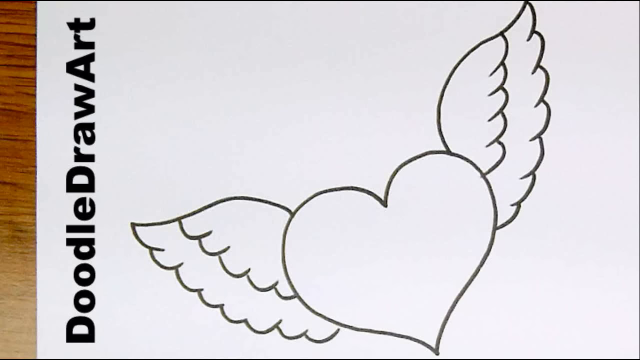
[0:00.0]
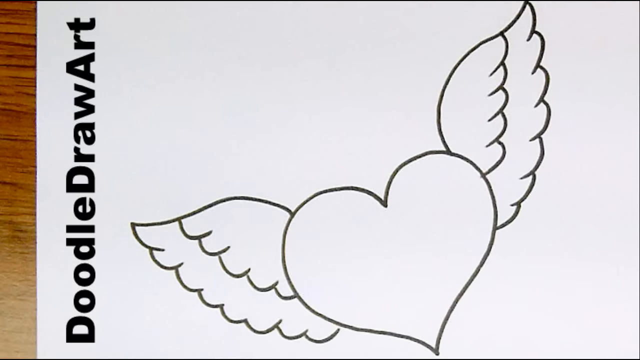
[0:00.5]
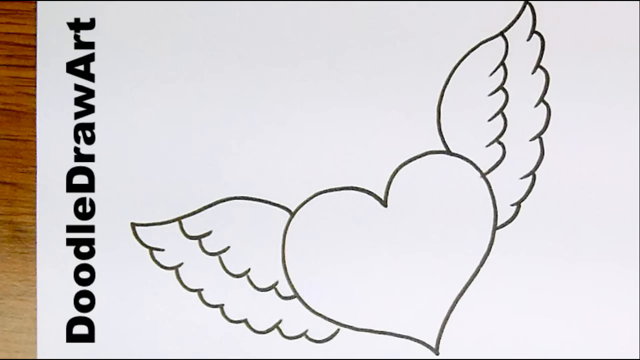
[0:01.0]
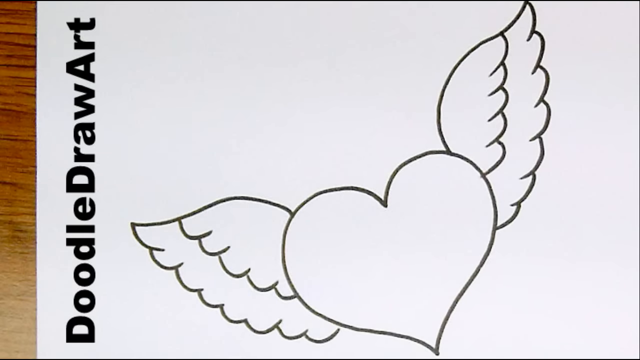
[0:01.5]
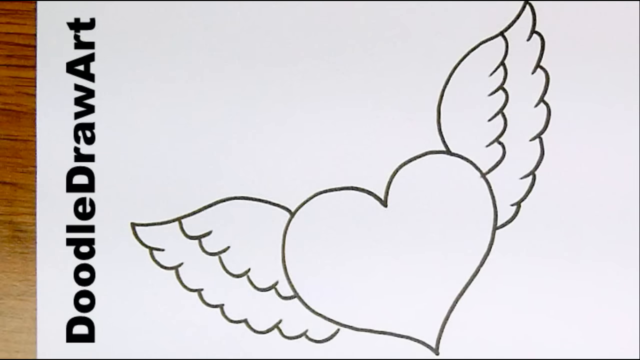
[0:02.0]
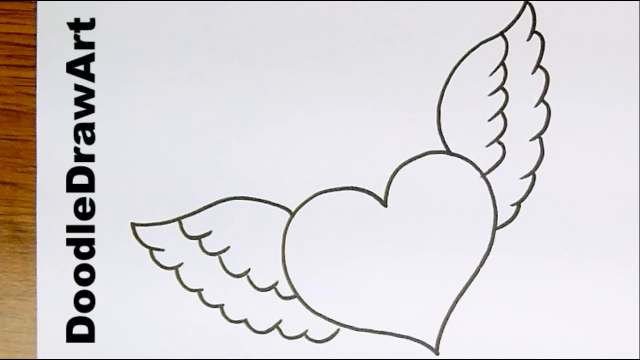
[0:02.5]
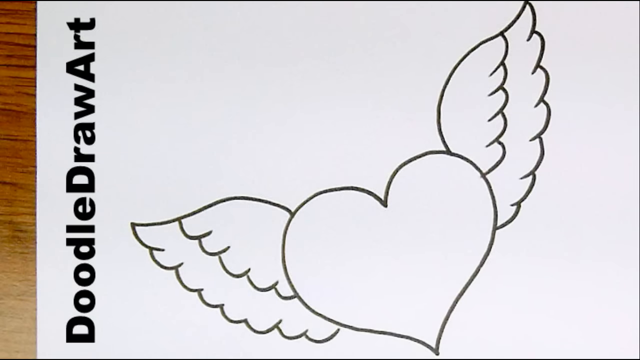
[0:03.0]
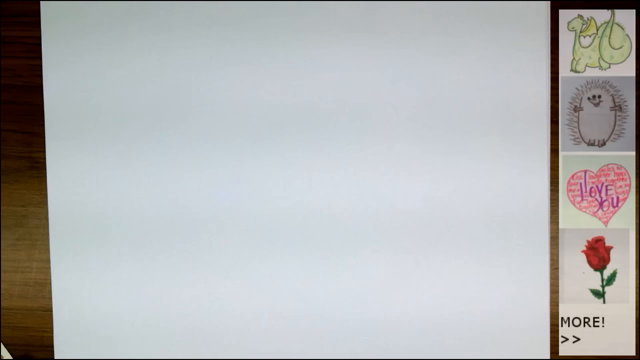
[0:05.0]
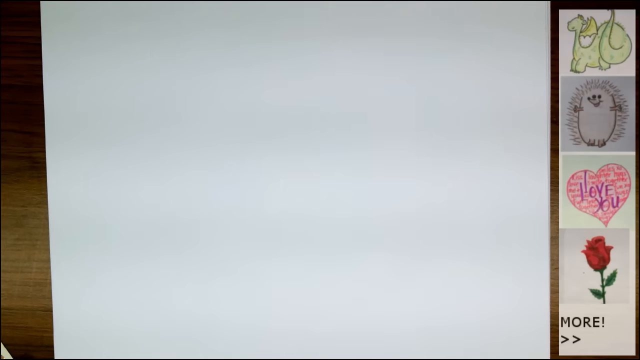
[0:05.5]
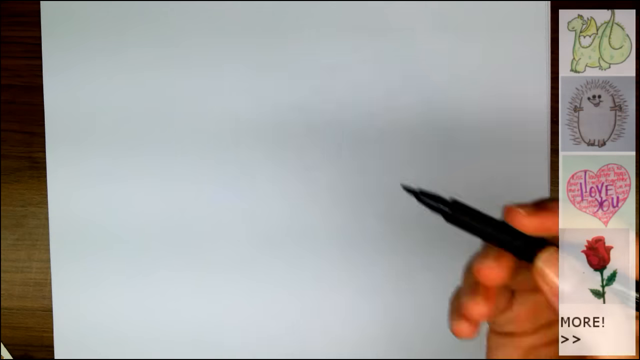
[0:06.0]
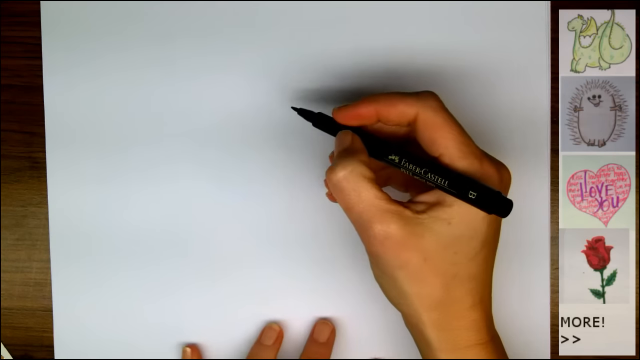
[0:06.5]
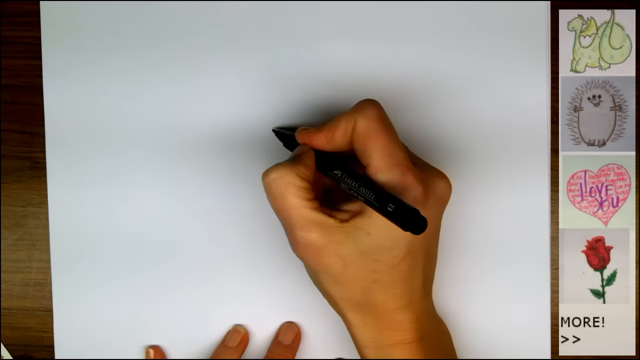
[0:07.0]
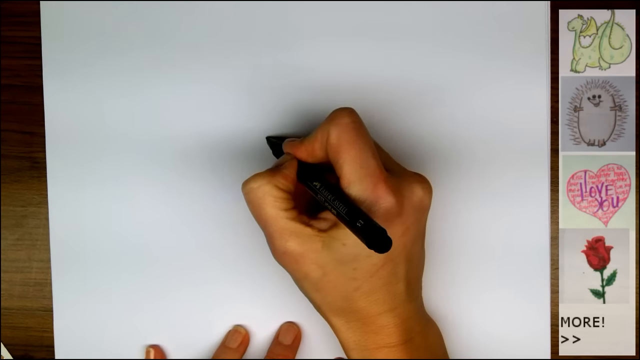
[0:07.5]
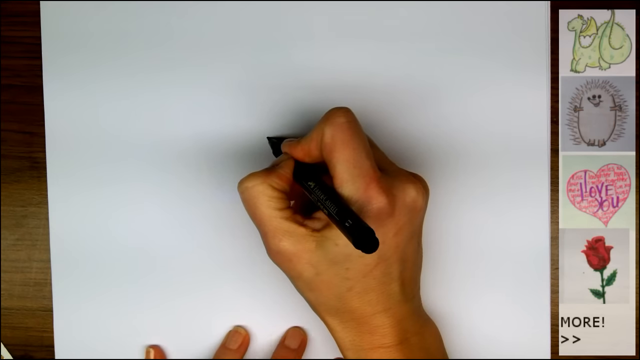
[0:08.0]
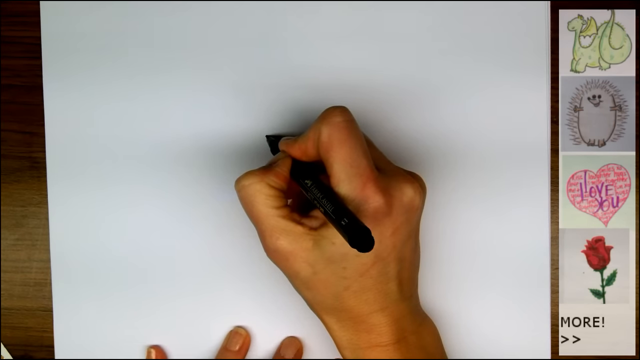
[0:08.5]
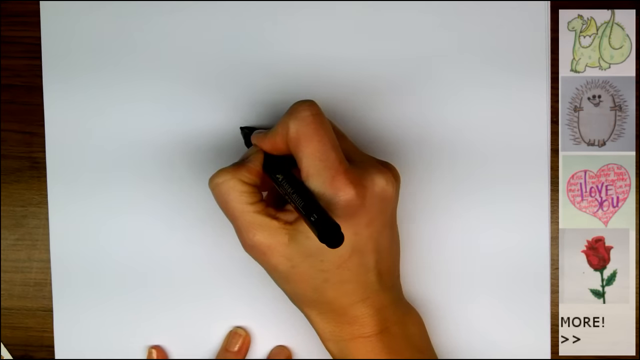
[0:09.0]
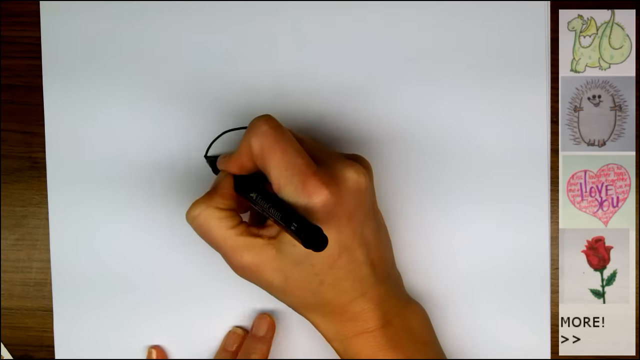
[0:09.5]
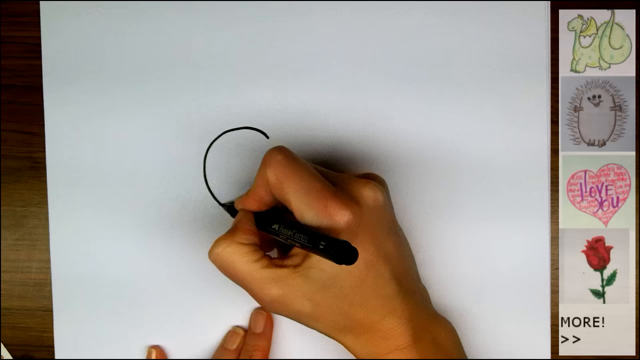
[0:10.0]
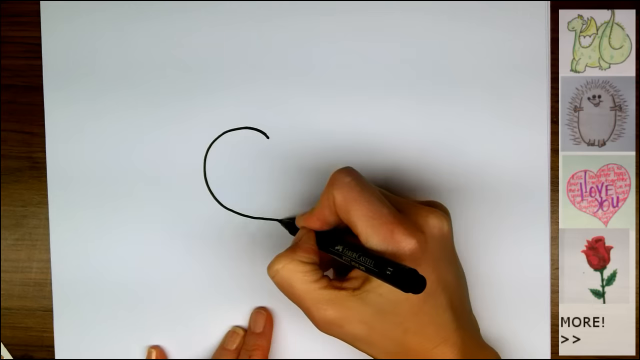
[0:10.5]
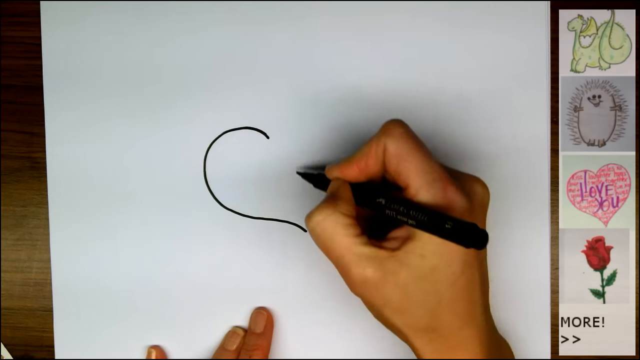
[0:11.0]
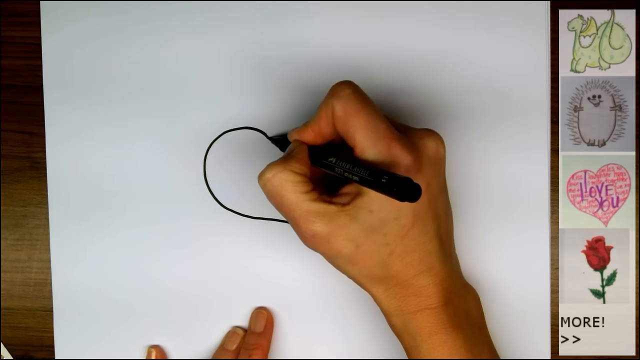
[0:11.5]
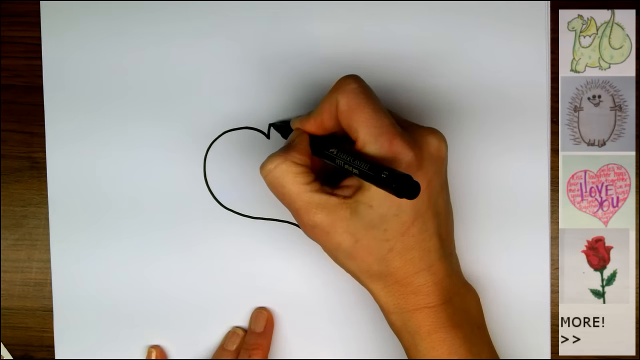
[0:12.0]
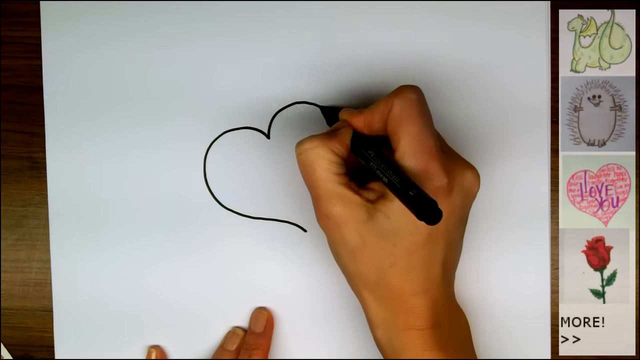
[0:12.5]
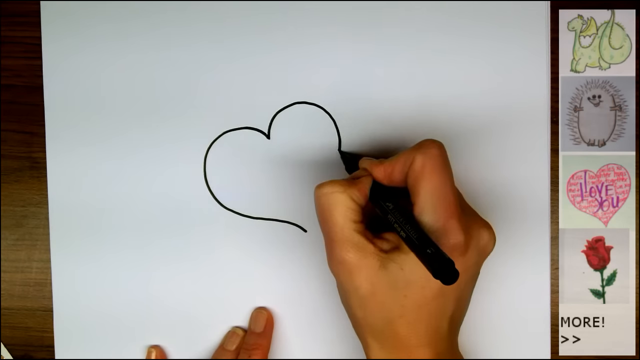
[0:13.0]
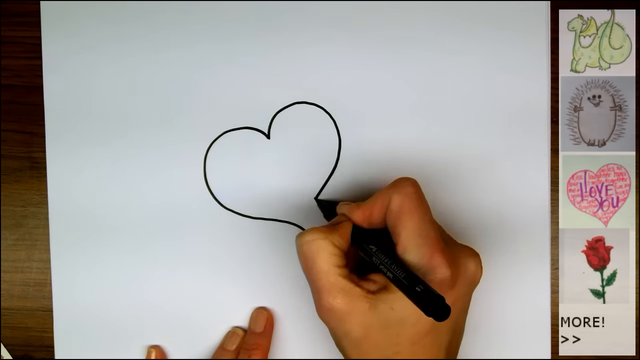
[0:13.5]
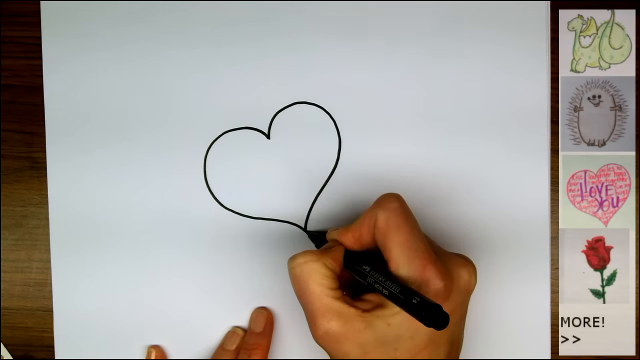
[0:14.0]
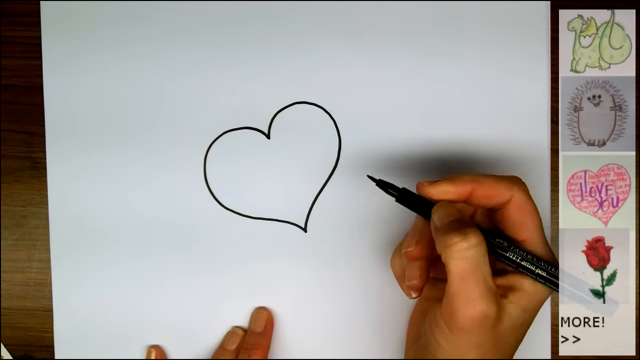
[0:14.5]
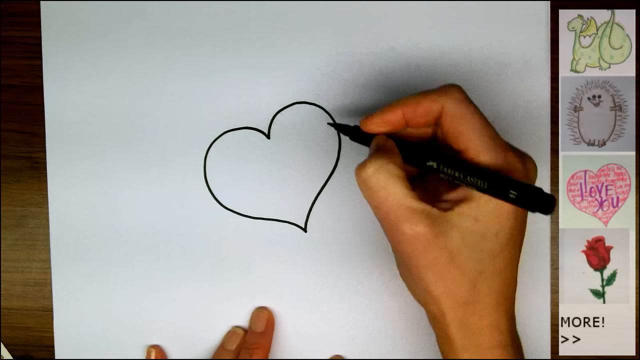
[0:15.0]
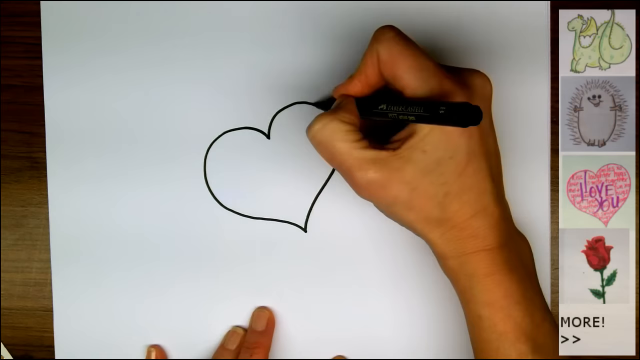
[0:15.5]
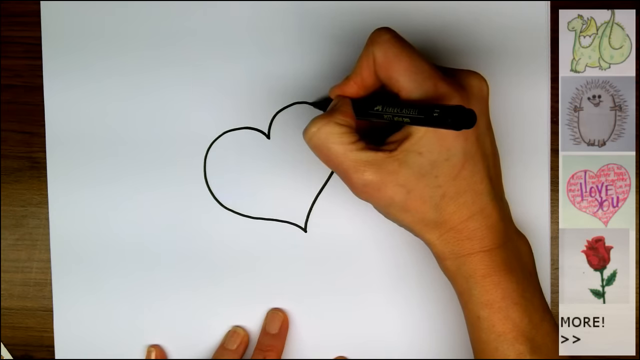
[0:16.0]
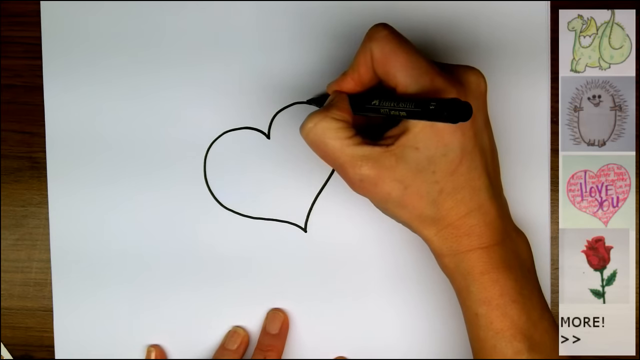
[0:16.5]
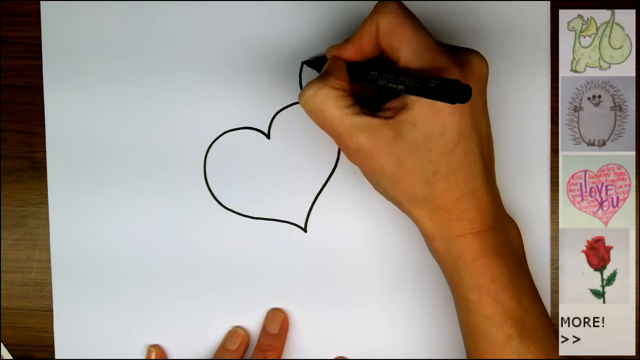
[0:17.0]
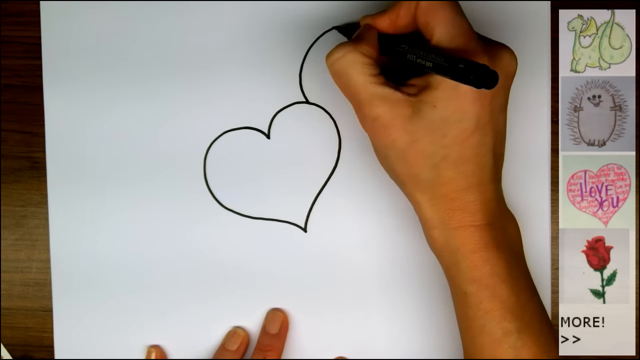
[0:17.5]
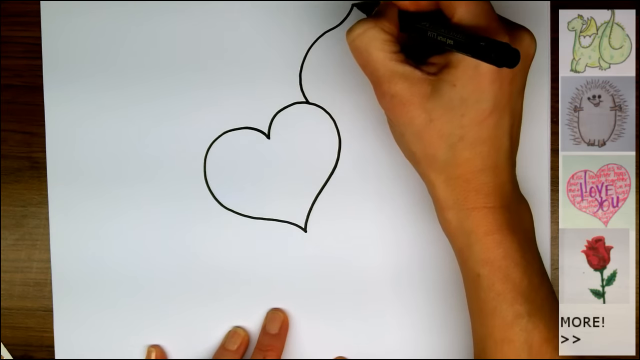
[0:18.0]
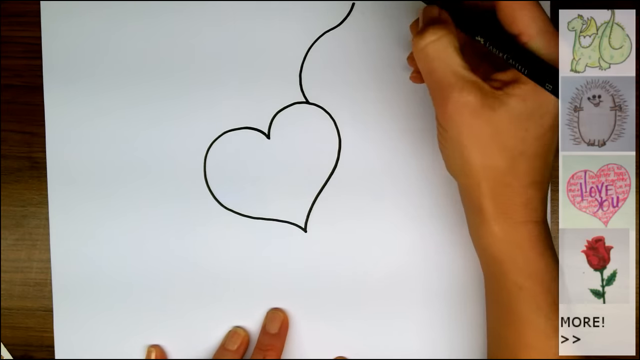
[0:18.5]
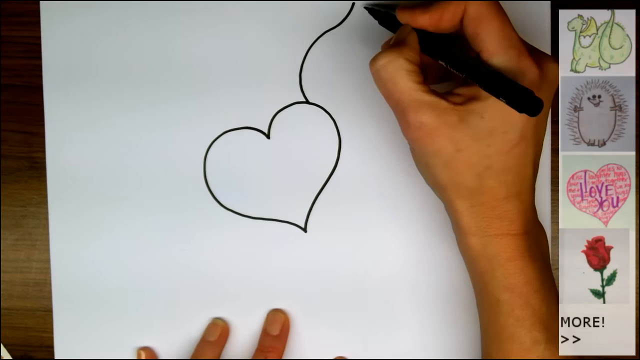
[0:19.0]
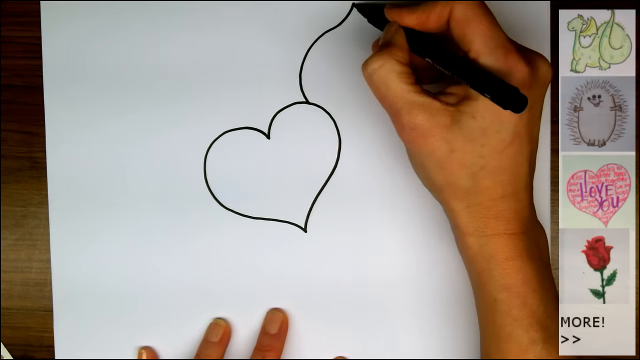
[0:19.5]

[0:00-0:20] The DIY video opens on a piece of paper with a drawing of a heart with wings behind it, and on the left side of the paper it says 'DoodleDrawArt'. A time-lapse follows of a person using a black marker in their right hand. On the right-hand side are a number of pictures, including a dragon, a dog, a heart that says 'I love you,' and a rose. The person draws a heart with the black marker, which seems to be in perfect shape. Shortly after, they use the marker to draw the right wing behind the heart, then draw the white wing for the heart. While drawing, they place their left hand on the bottom of the paper to secure it.